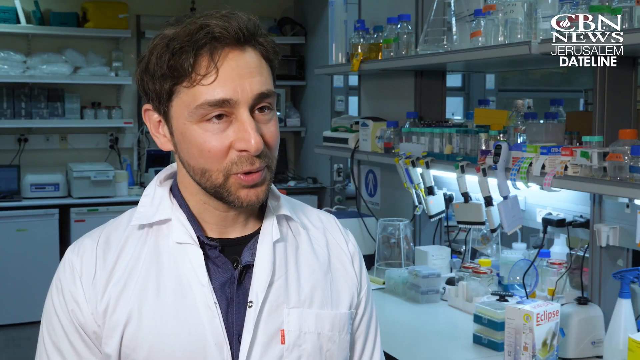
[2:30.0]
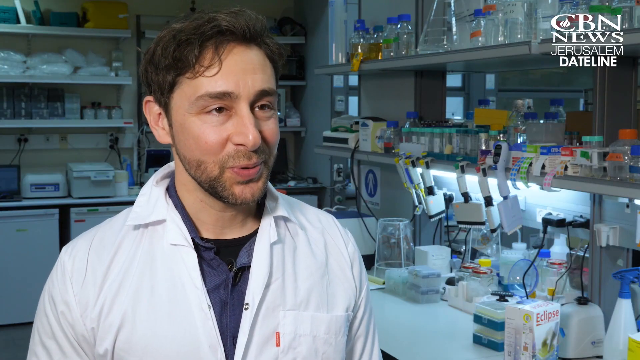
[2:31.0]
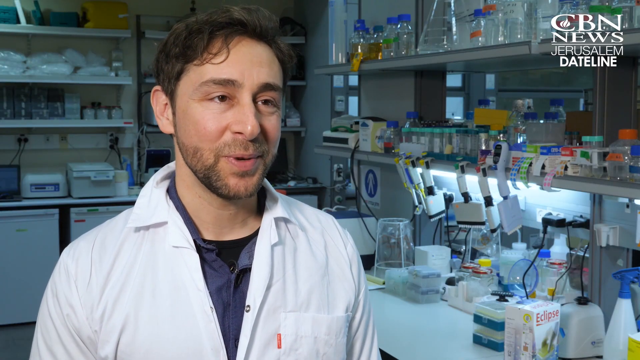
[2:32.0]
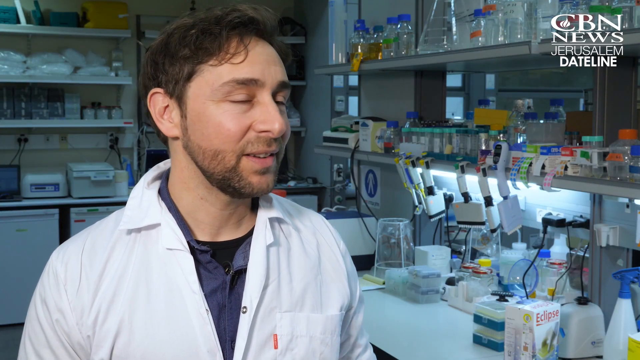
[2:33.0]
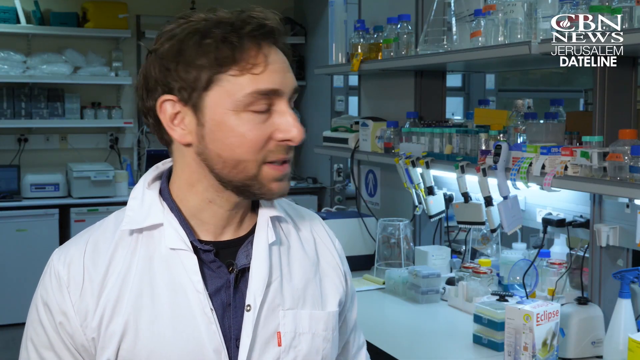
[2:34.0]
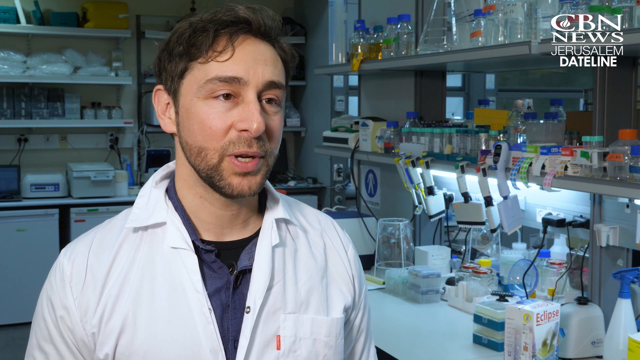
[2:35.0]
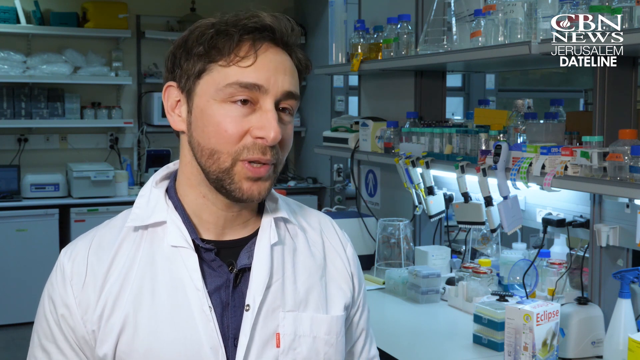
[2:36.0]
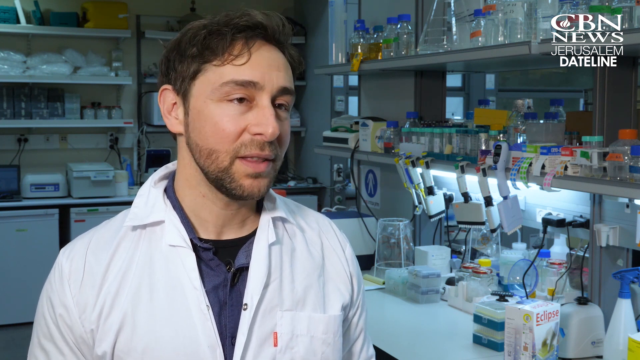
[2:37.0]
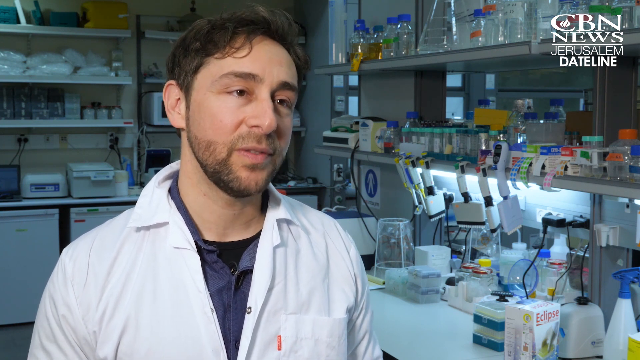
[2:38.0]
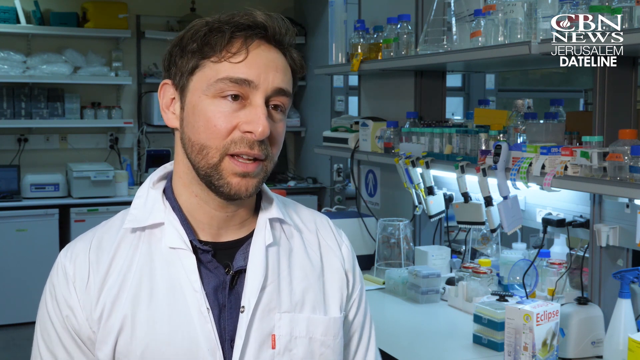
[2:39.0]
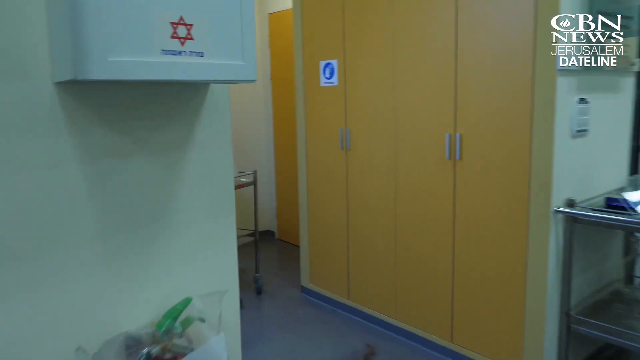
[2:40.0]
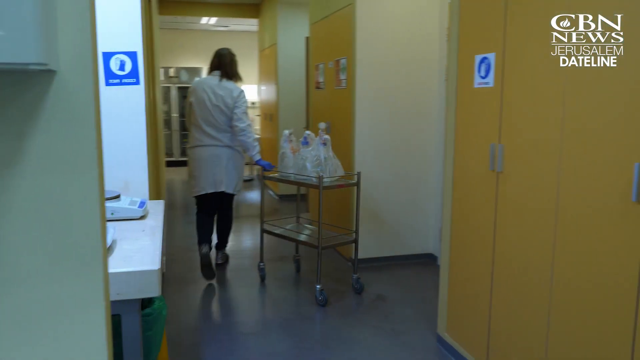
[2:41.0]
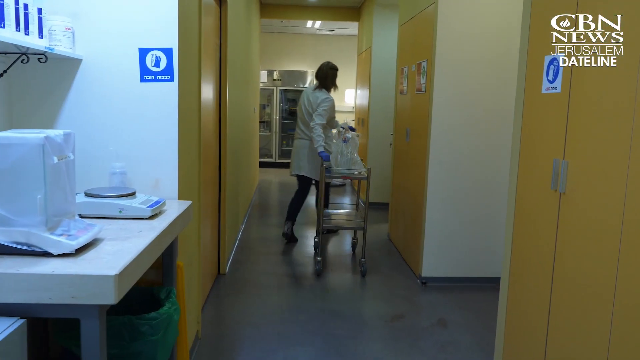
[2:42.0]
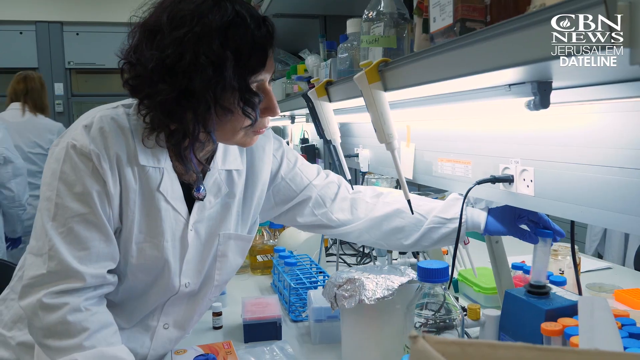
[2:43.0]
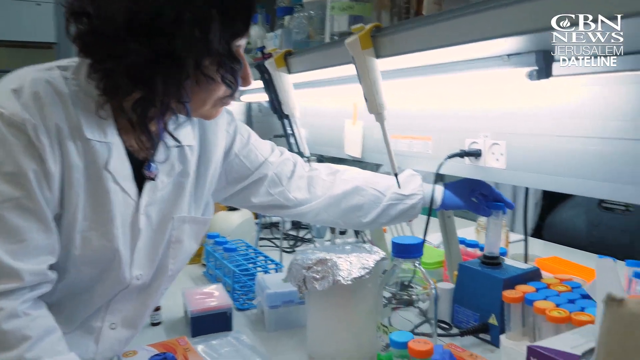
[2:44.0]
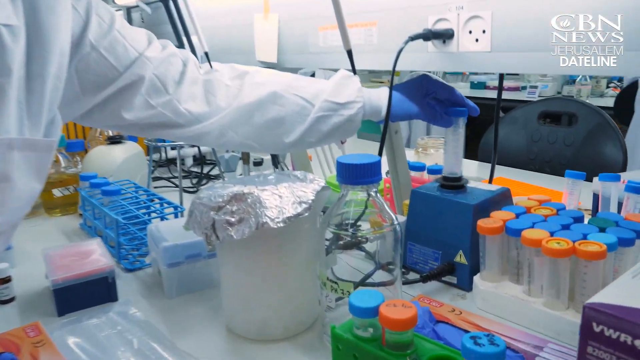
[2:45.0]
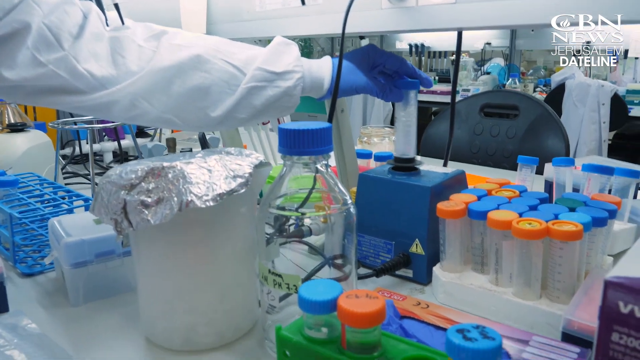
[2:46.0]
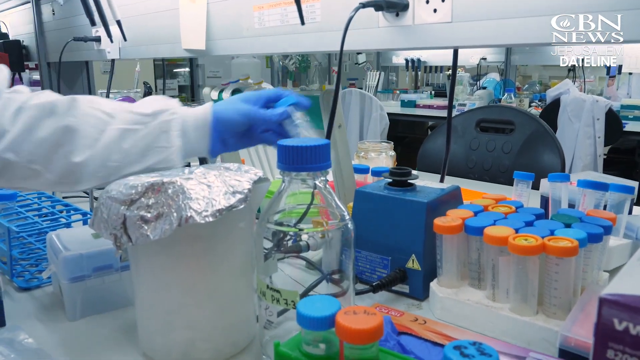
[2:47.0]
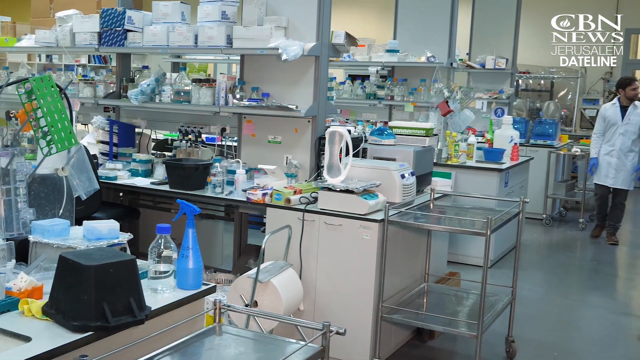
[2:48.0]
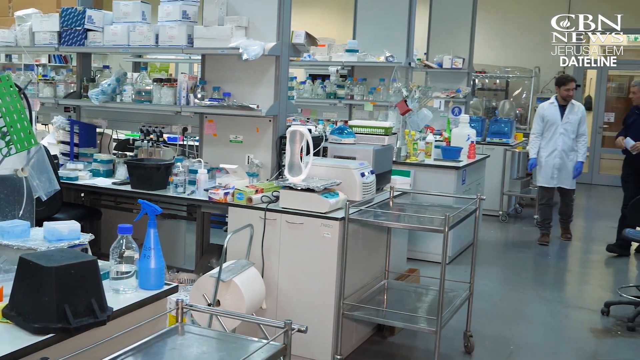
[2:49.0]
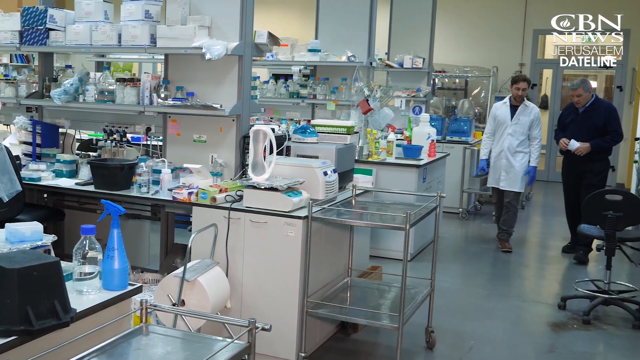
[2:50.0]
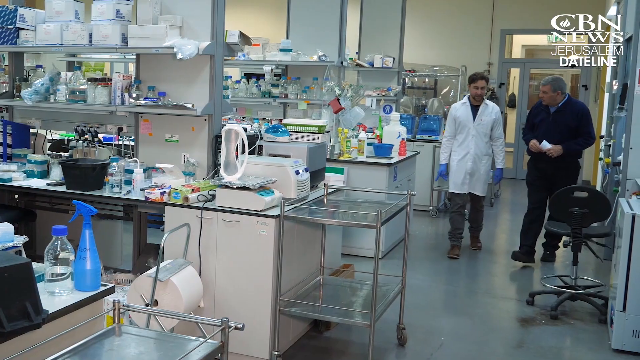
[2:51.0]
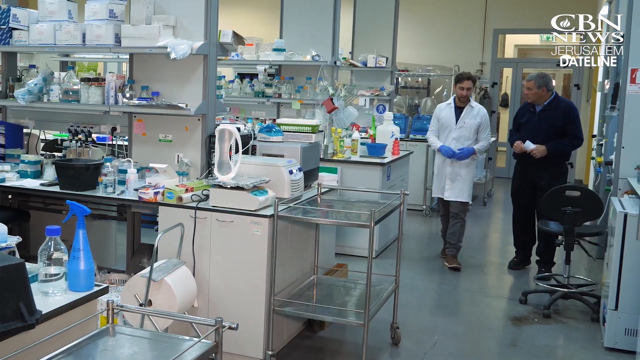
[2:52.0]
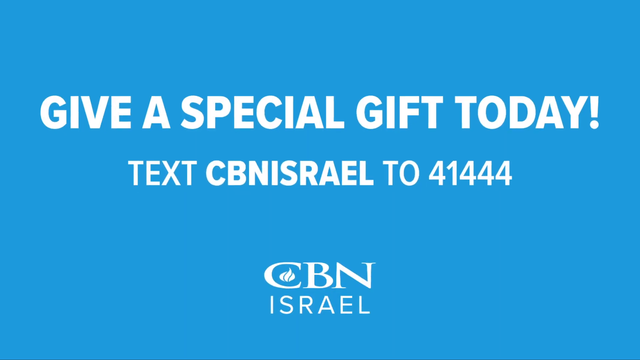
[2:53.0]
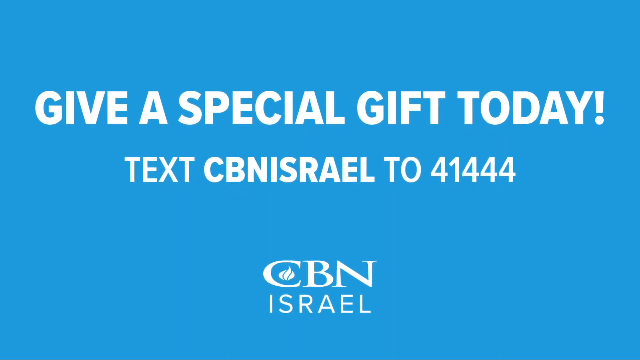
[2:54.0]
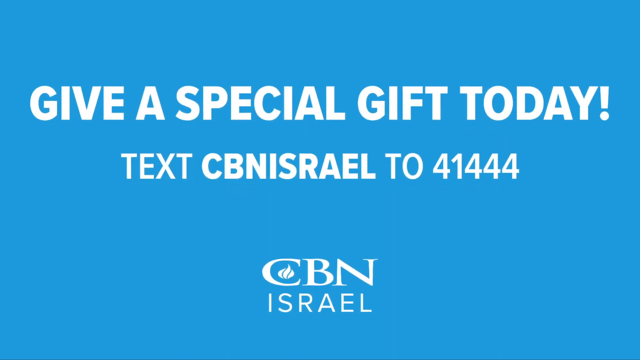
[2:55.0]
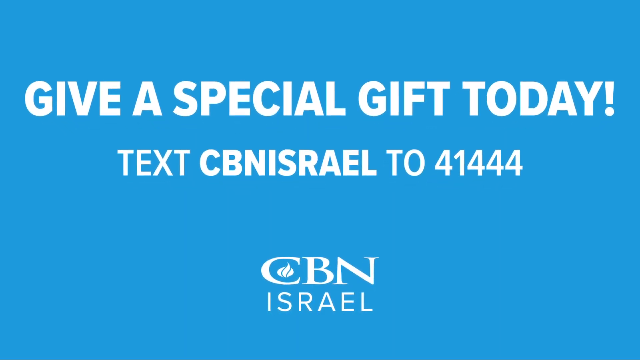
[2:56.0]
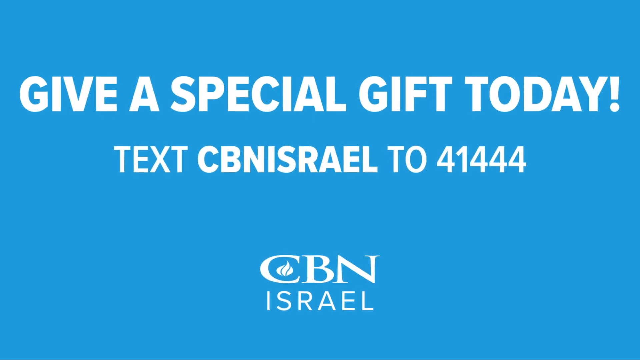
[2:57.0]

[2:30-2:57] The straight- or wavy-haired man continues talking in the interview. The video cuts to a female scientist pulling a cart along with her around the building, apparently going into some room. Another woman looks like she is putting a cream- or white-colored liquid into some sort of container, maybe testing it; there is a tube where she puts the substance in, and it seems to convert it. Near the end, the host from the very beginning walks with the wavy-haired man for a moment. An end screen shows white text on a light blue background beginning "give a special gift", and at the bottom it says "CBN Israel".